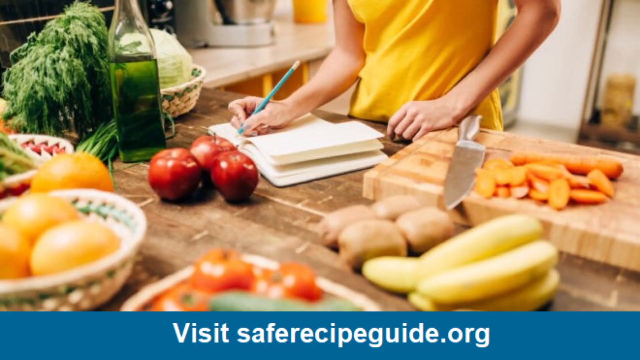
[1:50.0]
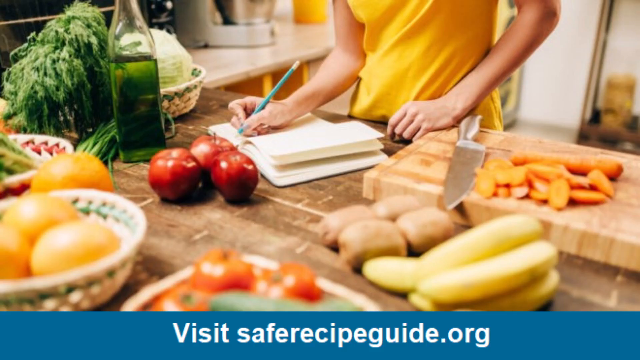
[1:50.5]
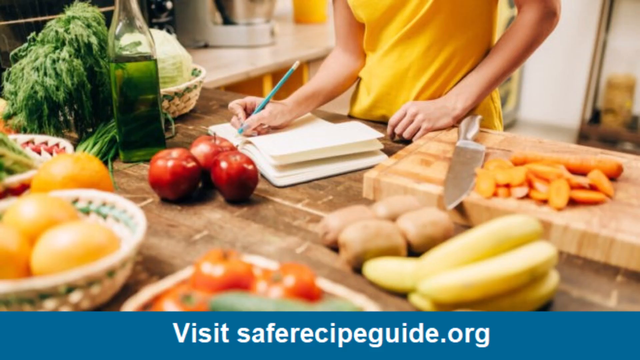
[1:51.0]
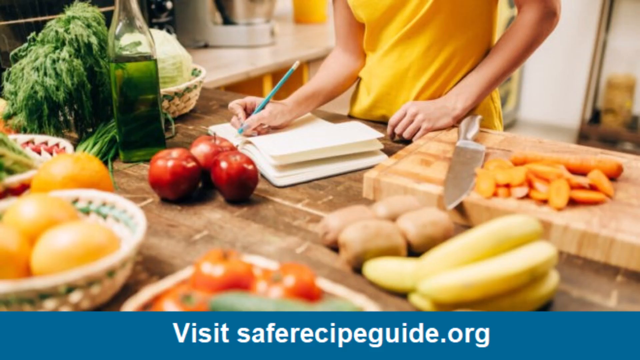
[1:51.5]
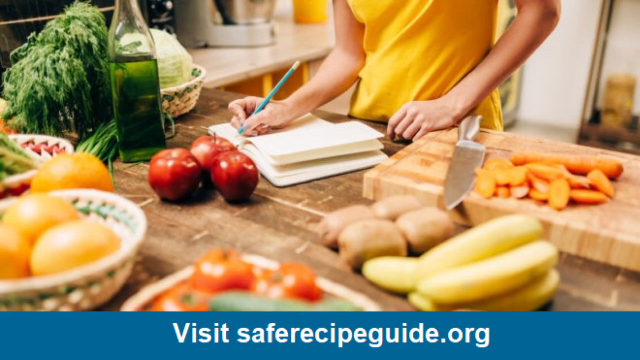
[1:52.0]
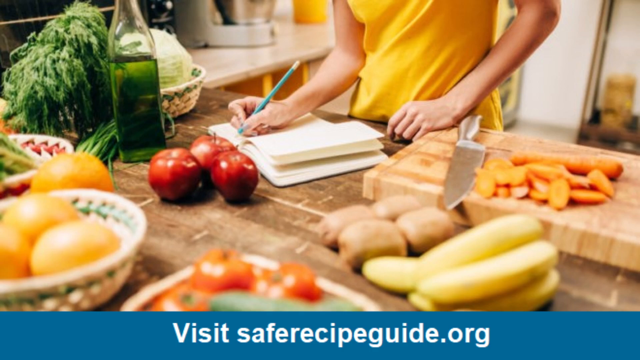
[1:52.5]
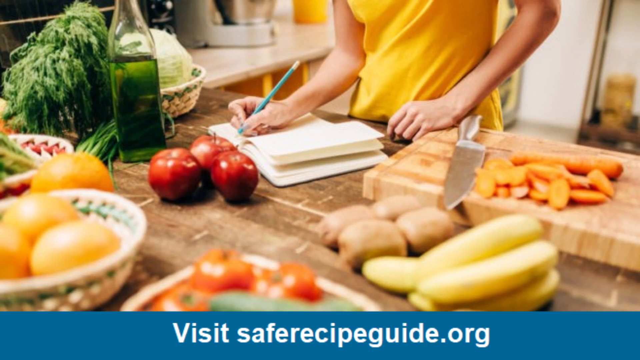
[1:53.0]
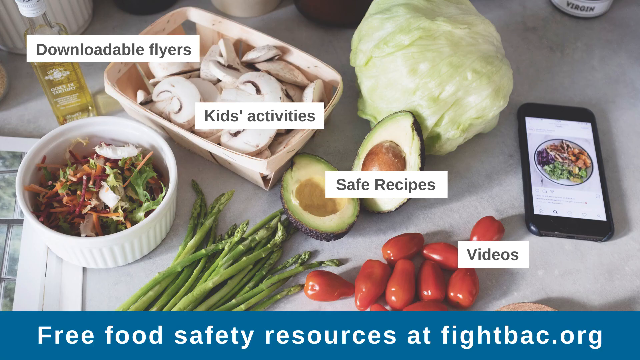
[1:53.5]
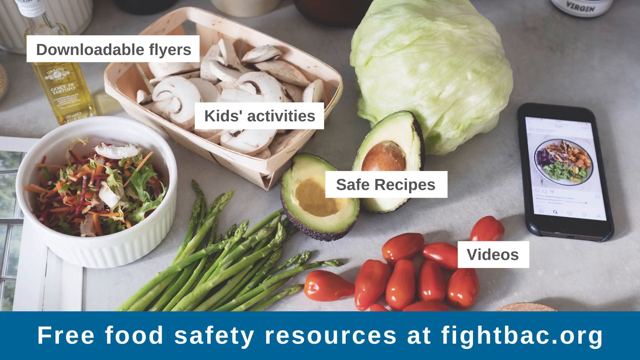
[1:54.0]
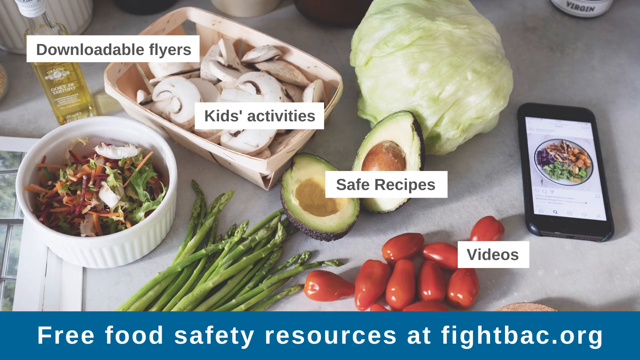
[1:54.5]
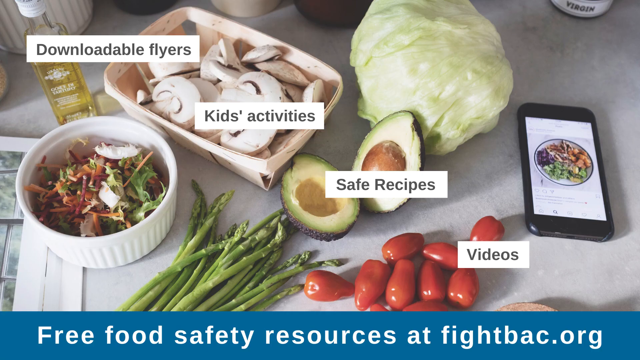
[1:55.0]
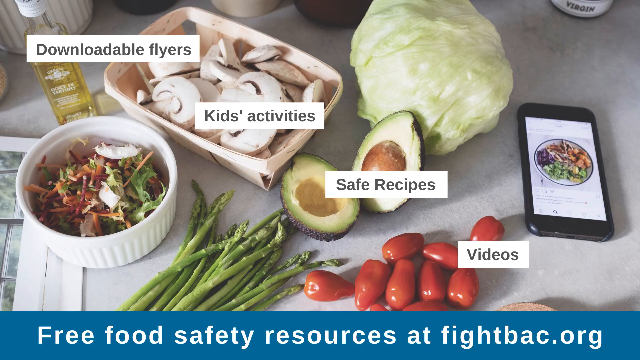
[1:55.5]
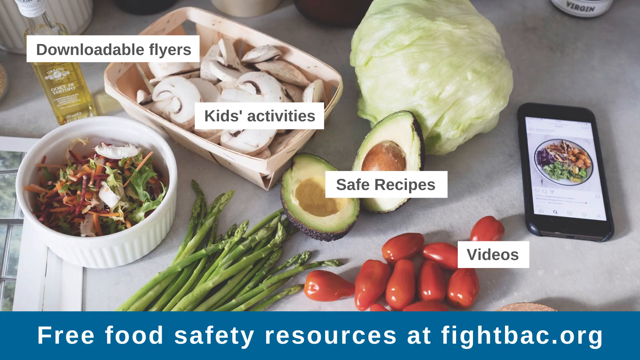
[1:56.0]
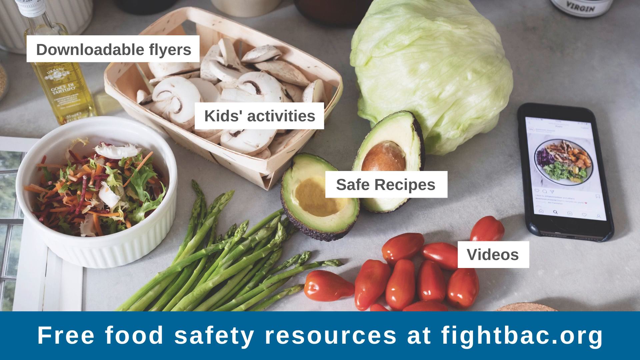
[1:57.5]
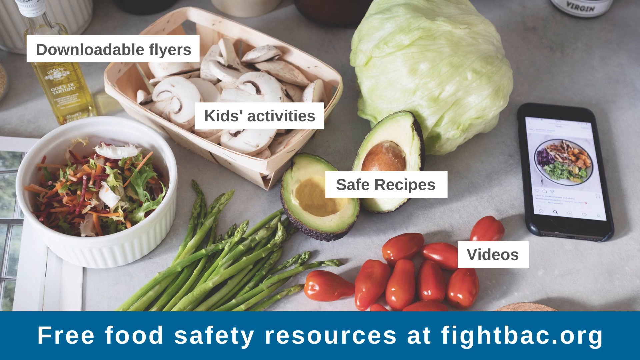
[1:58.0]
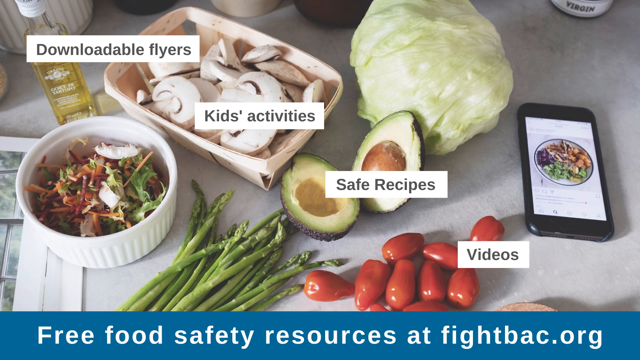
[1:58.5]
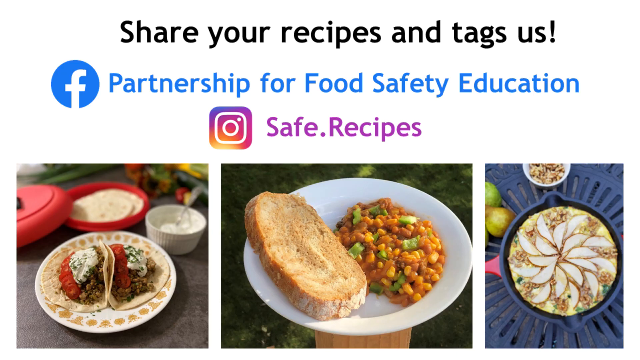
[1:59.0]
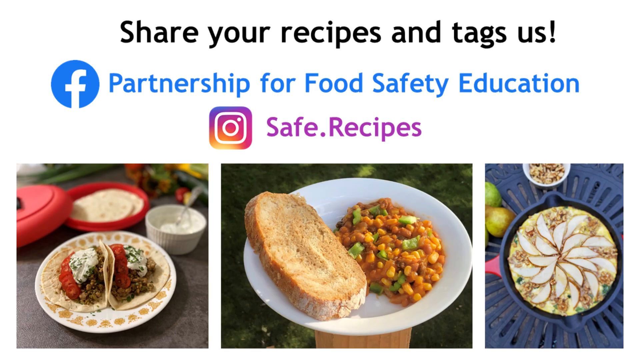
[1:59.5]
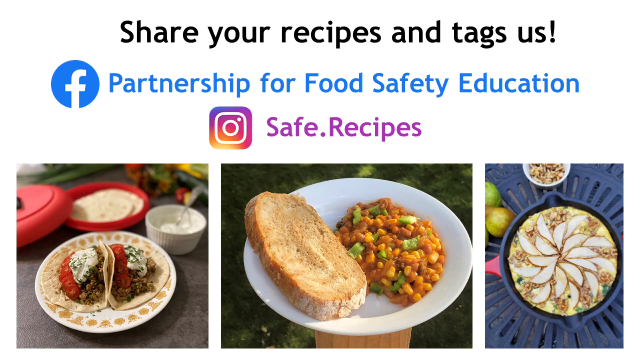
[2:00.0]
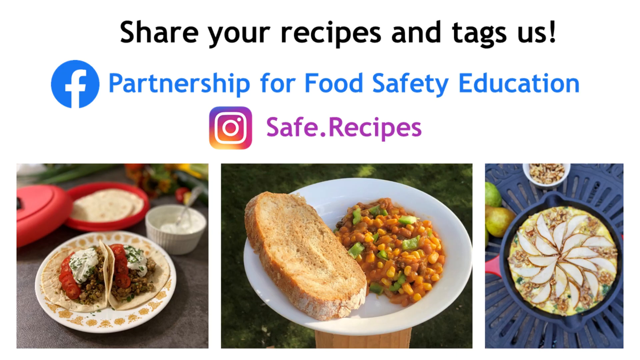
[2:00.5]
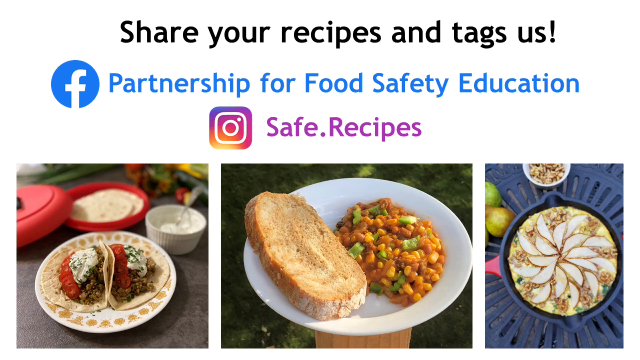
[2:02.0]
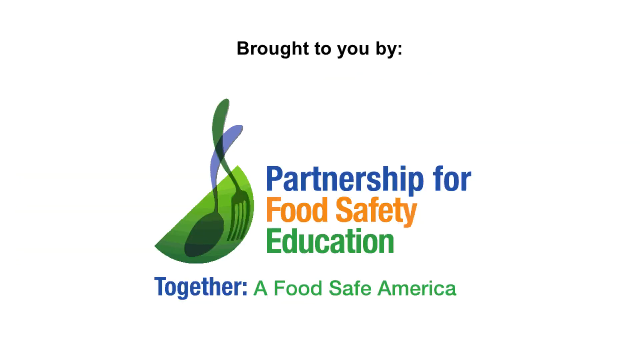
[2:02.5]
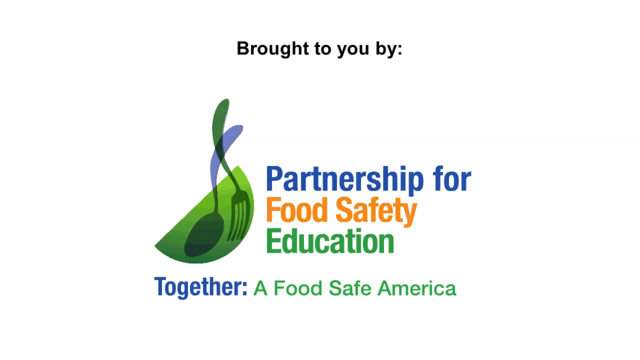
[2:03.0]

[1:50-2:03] Many items are on the table, including the knife she is going to use and a board, along with all the ingredients. The kitchen and her work area are clean. She prepares her things and writes. The mom is using a book, and the kid looks happy.